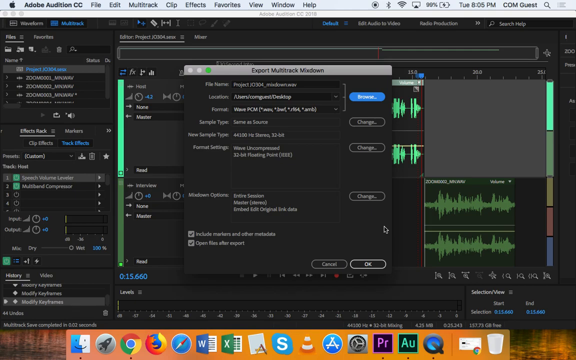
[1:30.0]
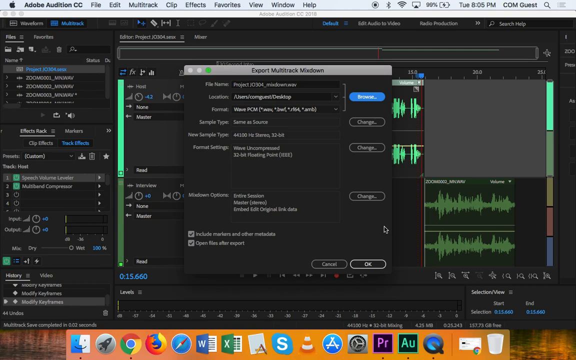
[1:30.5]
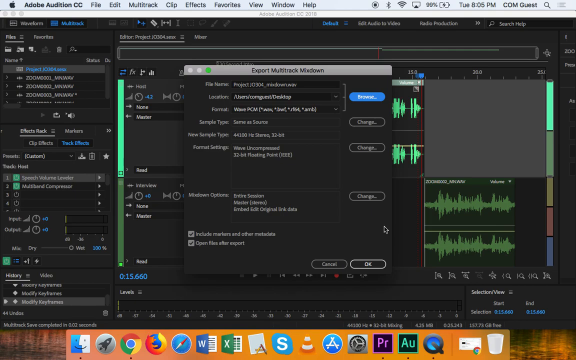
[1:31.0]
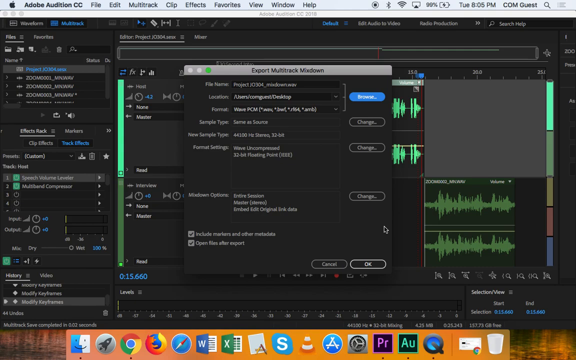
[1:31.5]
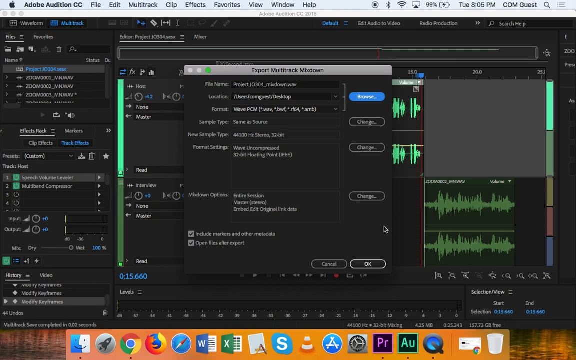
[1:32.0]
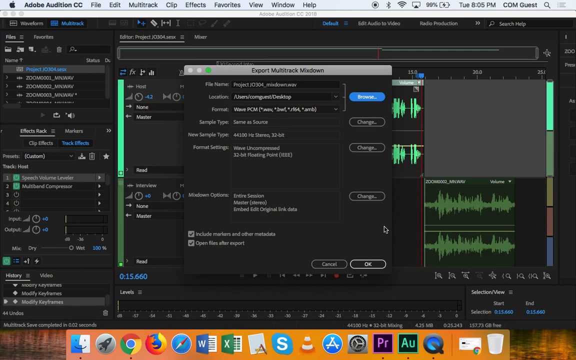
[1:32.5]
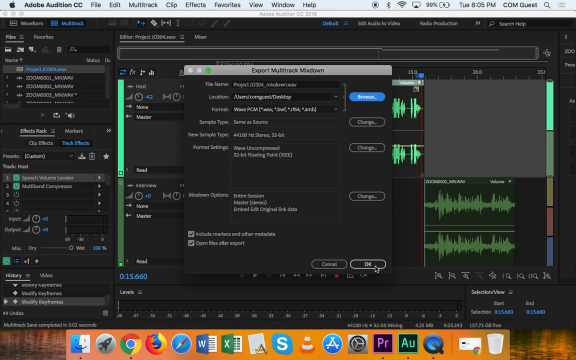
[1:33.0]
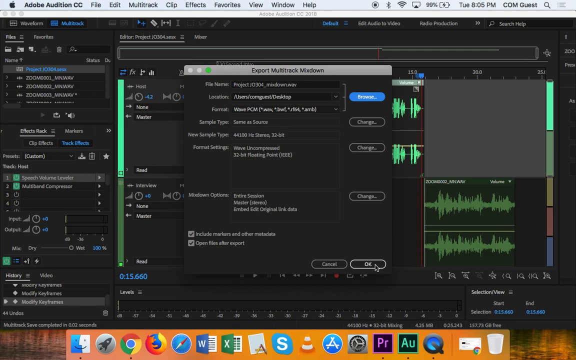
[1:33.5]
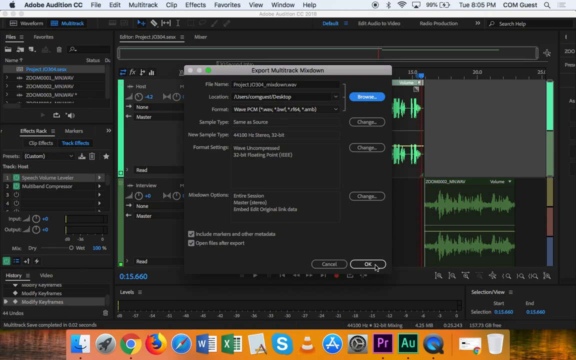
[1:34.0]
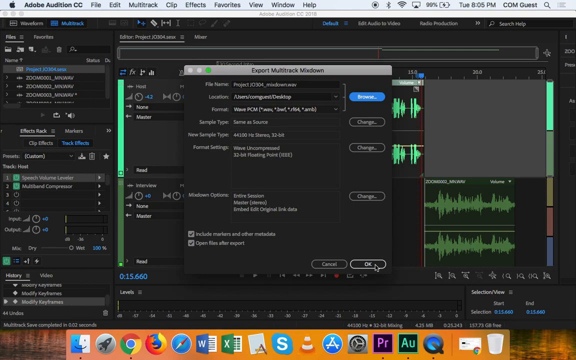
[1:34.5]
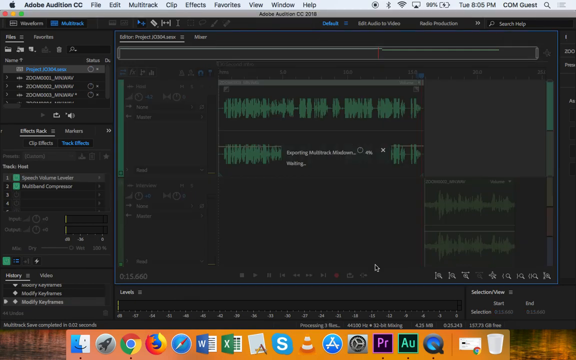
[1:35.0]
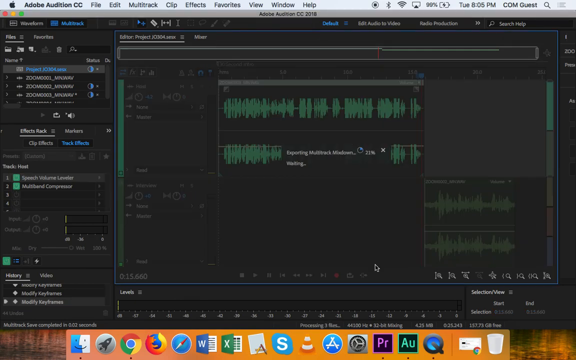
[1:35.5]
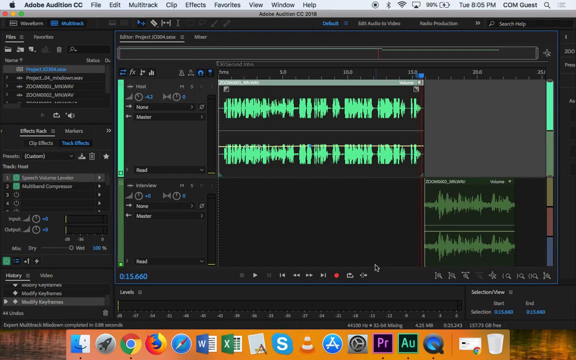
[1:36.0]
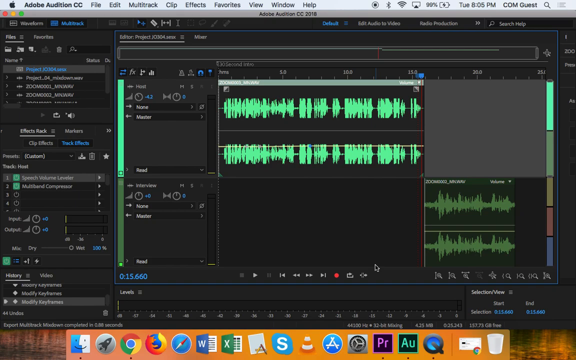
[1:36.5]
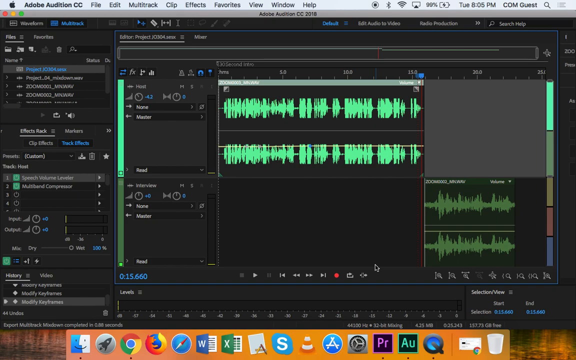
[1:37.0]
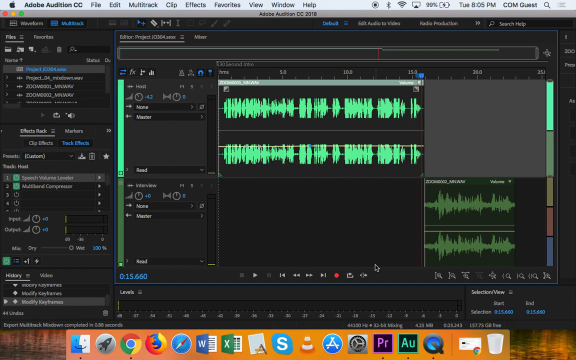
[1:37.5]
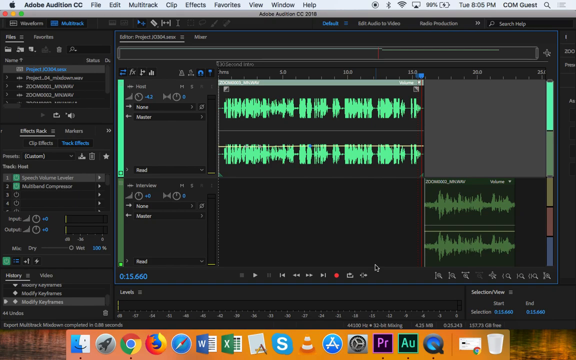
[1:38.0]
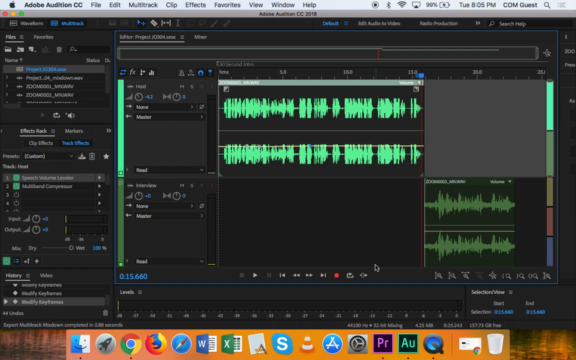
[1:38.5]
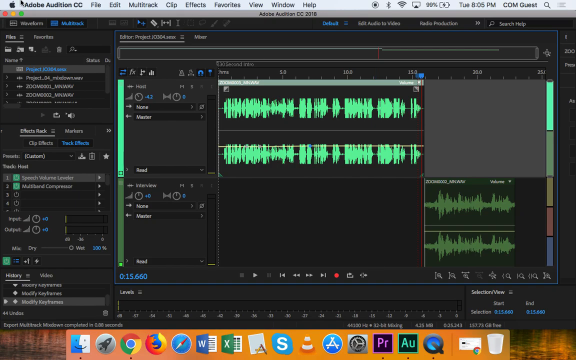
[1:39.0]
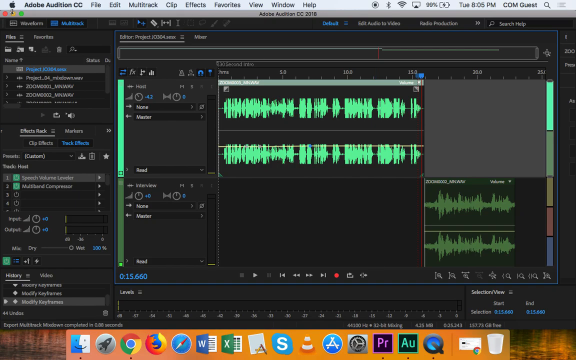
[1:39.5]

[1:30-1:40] The user is recording their screen in Adobe Audition CC, with a window open on top of the program that reads "export multi-track mixdown". The mouse cursor rests on empty space at the bottom right of the window, then moves down to click OK. A brief small window appears reading "exporting" with a small animated blue circle, and it closes in less than a second. The cursor then goes up to the buttons that control the window, and the user minimizes Adobe Audition CC.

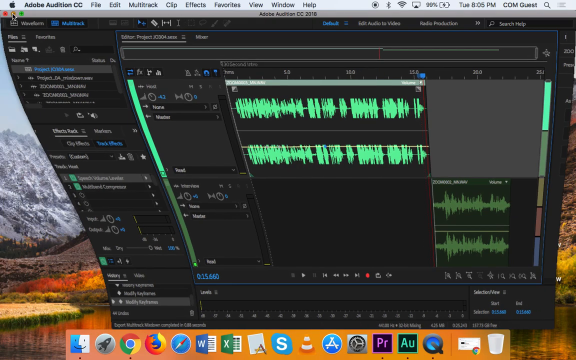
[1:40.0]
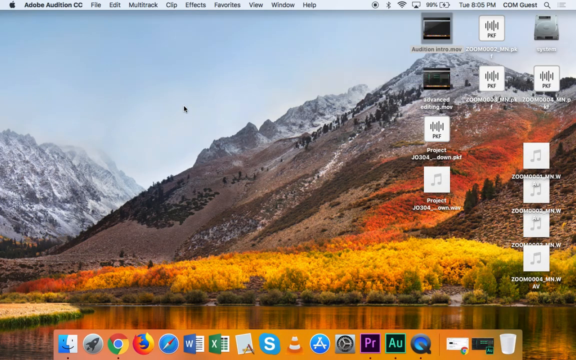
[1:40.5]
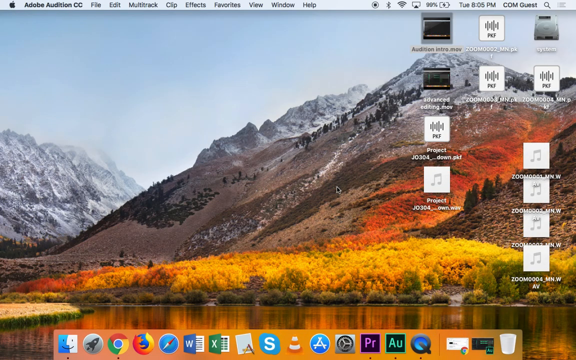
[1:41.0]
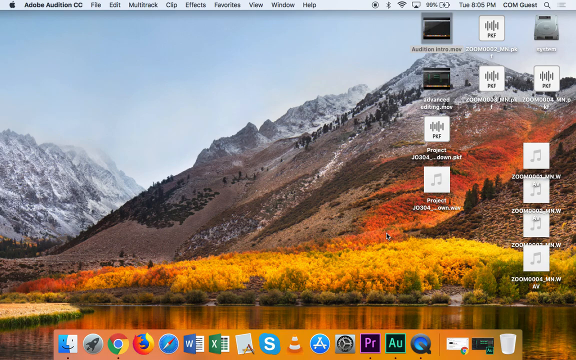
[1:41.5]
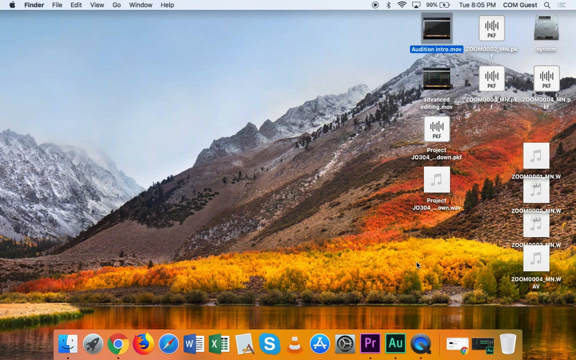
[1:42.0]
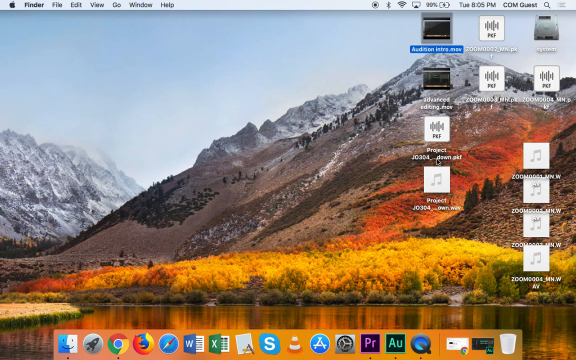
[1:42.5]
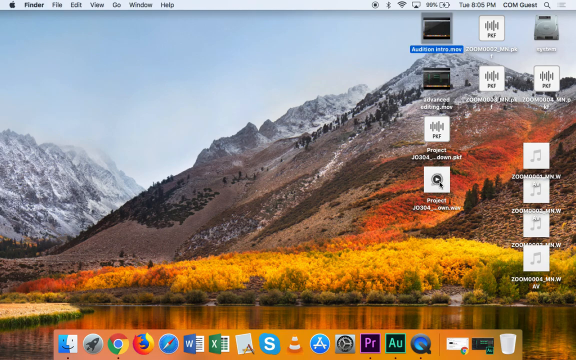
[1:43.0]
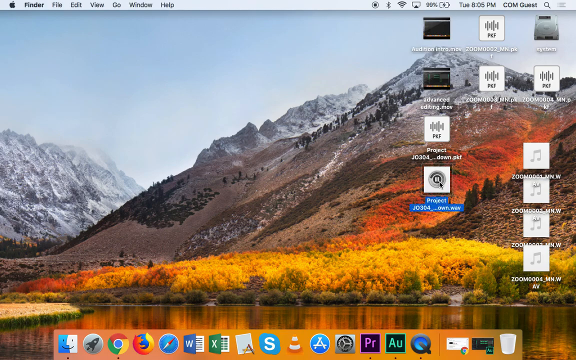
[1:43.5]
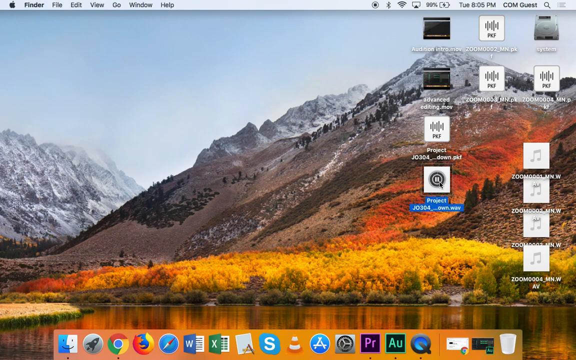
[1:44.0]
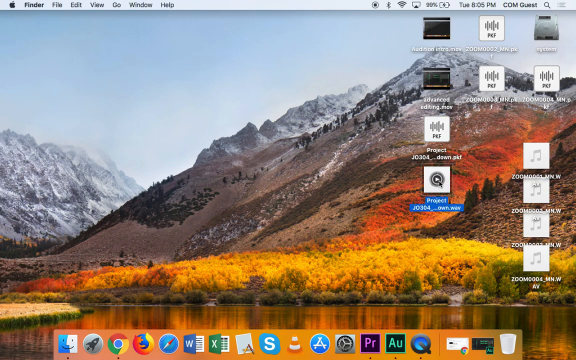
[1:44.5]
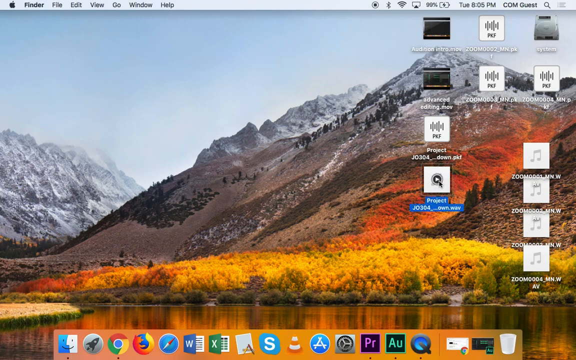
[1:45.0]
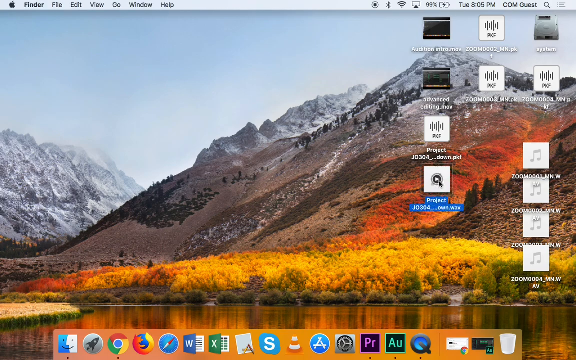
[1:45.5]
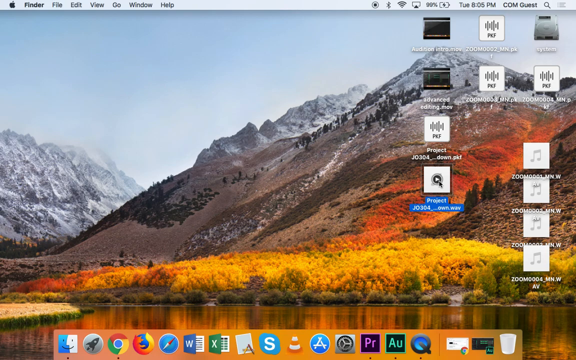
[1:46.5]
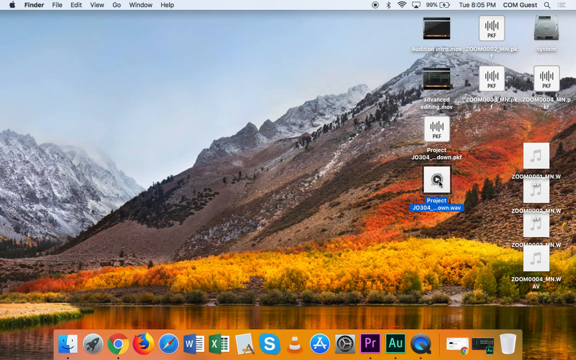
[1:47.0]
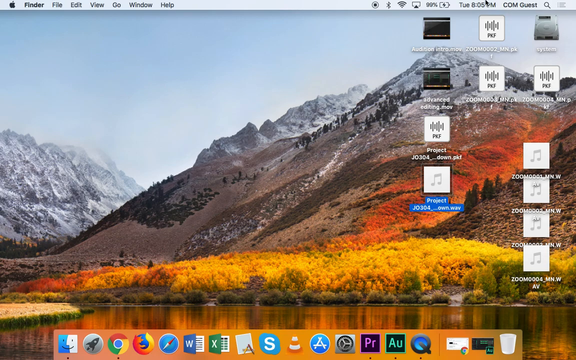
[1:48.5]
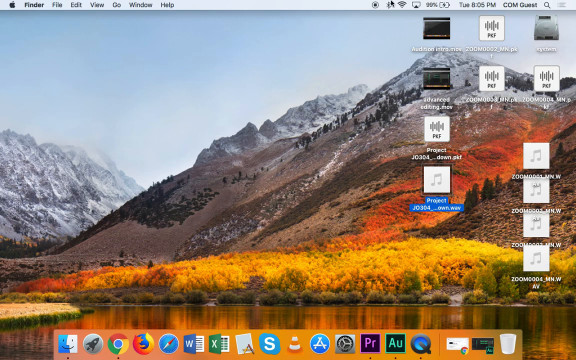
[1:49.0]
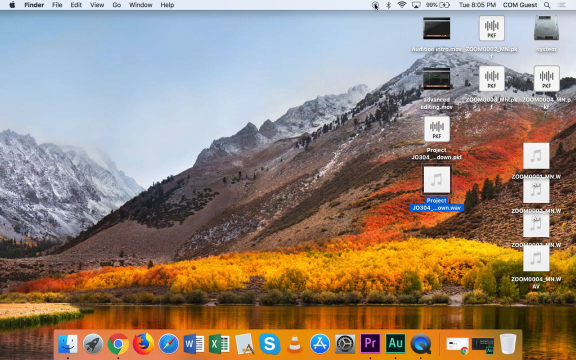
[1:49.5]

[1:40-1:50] The screen recording shows someone's Macintosh desktop after they minimize Adobe Audition CC. The desktop background is a photo of a large mountain range with white-capped mountains, yellow and green foliage at the foot of the mountains, and a lake in the foreground reflecting the mountains and the foliage. The person clicks on a file whose name begins "Project JO304" and ends in ".WAV". They click a play button on its icon, seemingly playing it, and then click a pause button on the icon.